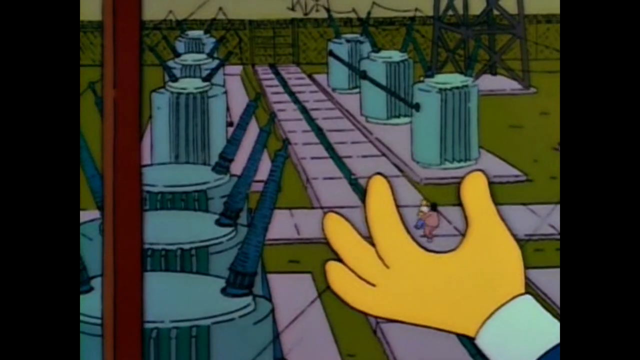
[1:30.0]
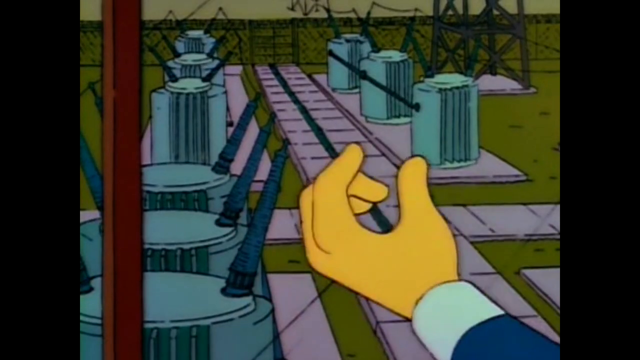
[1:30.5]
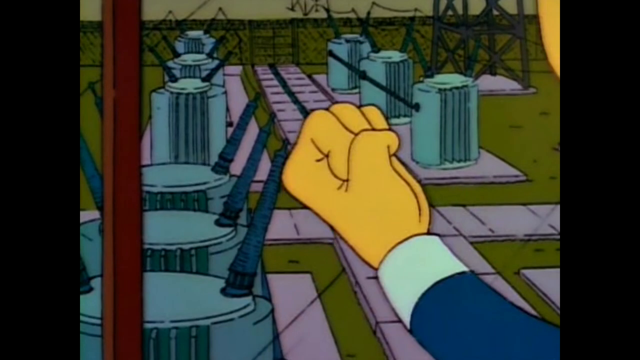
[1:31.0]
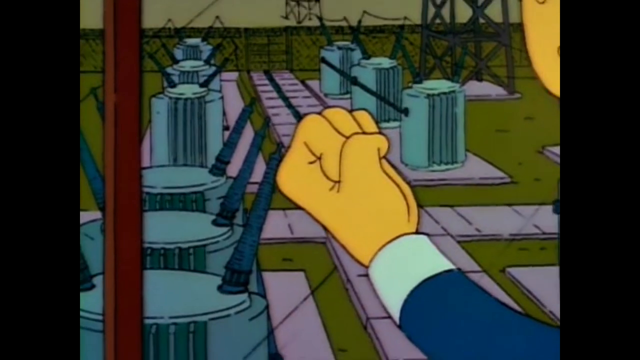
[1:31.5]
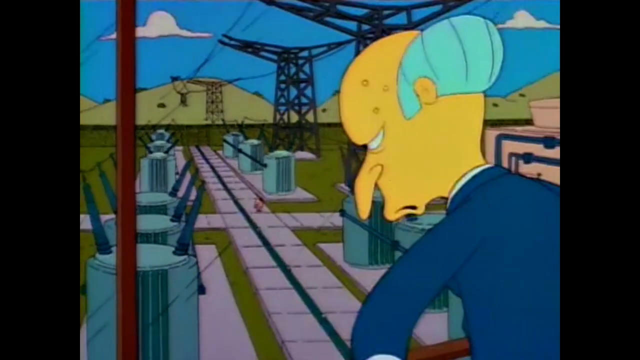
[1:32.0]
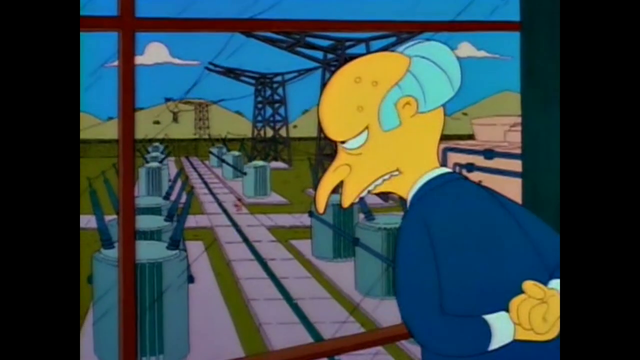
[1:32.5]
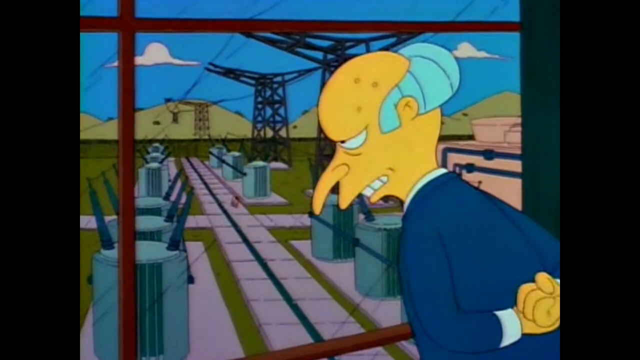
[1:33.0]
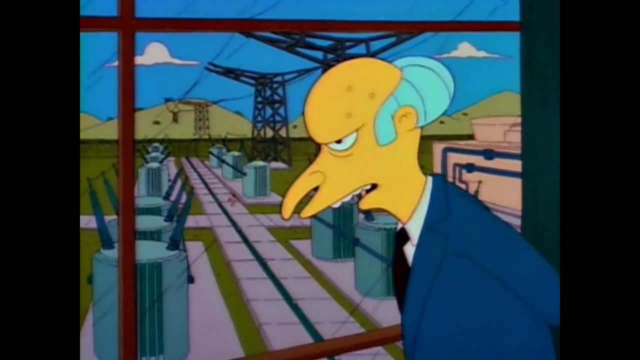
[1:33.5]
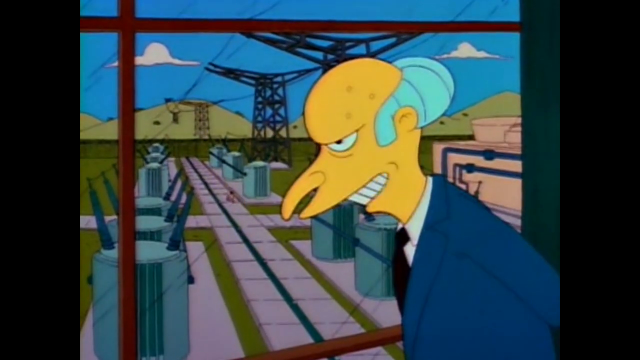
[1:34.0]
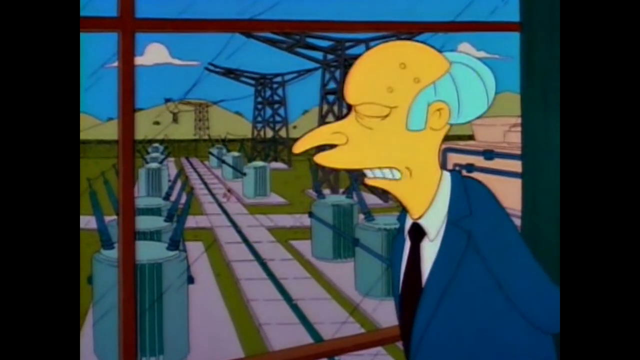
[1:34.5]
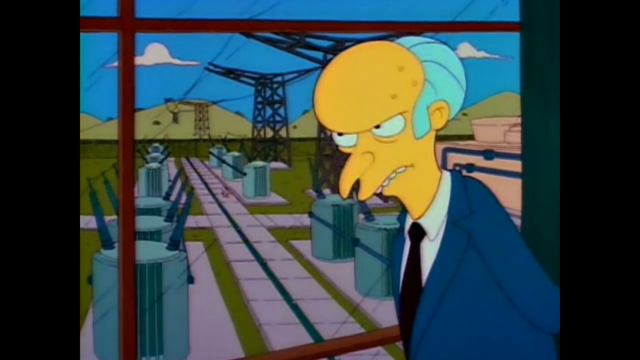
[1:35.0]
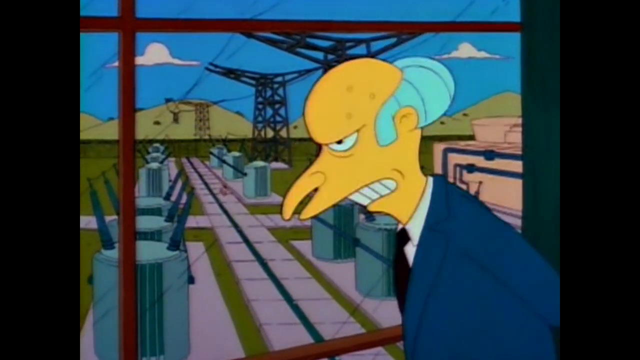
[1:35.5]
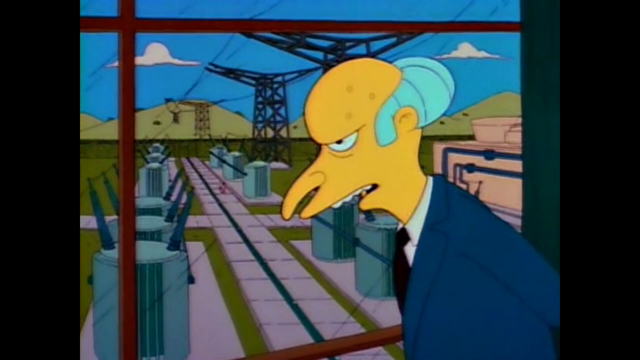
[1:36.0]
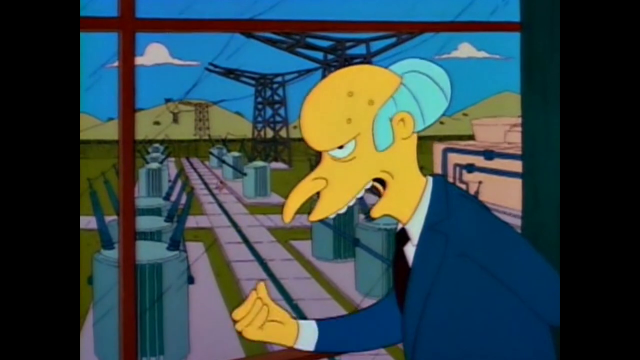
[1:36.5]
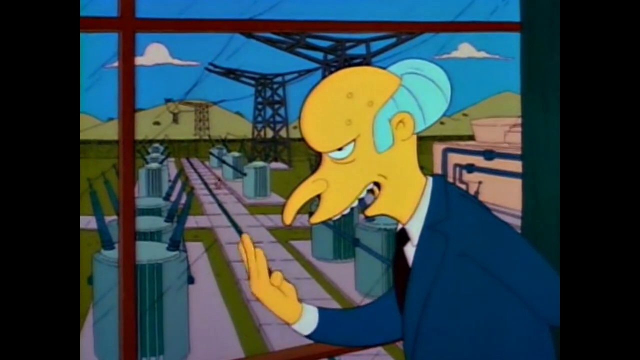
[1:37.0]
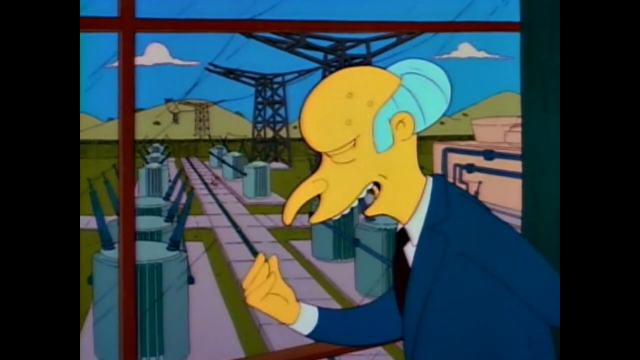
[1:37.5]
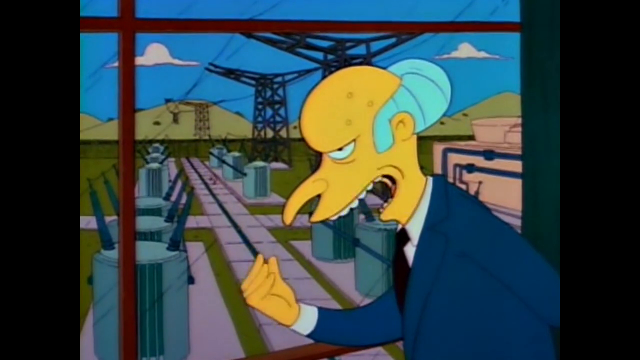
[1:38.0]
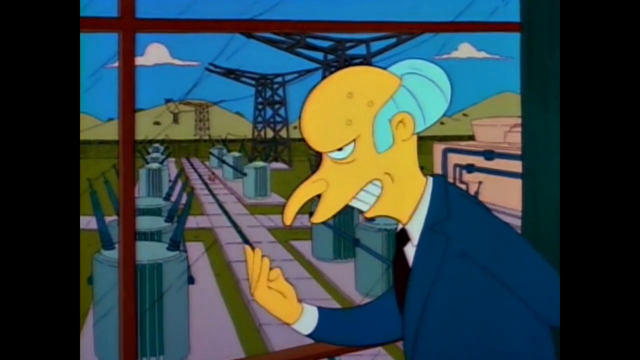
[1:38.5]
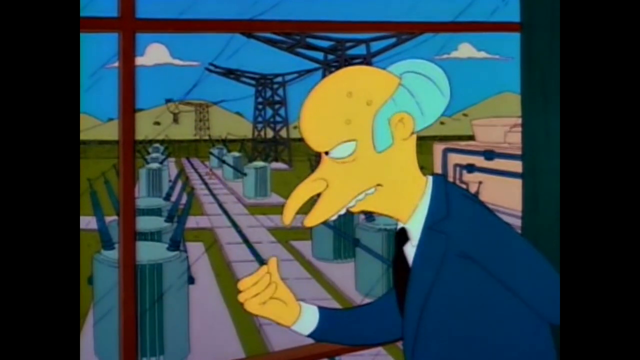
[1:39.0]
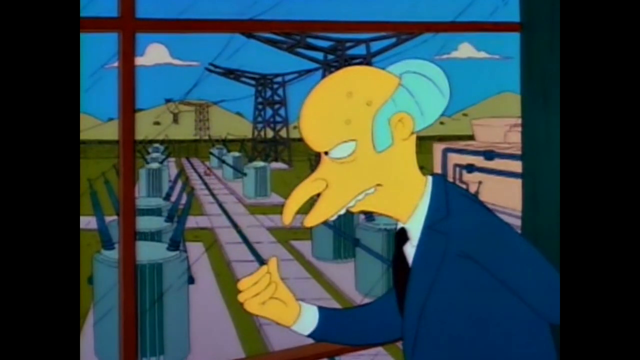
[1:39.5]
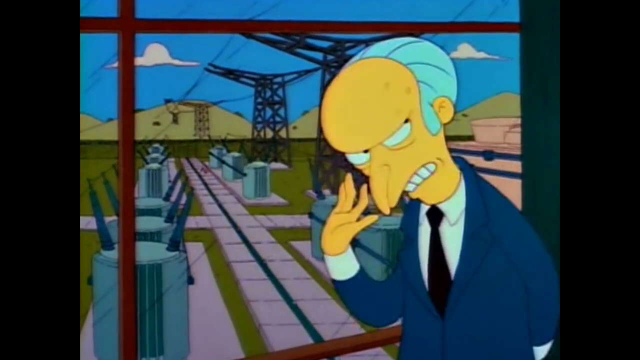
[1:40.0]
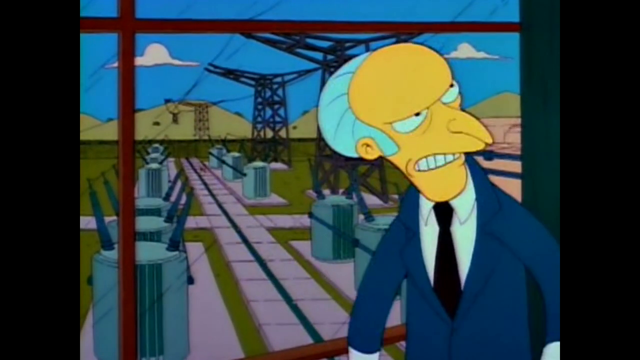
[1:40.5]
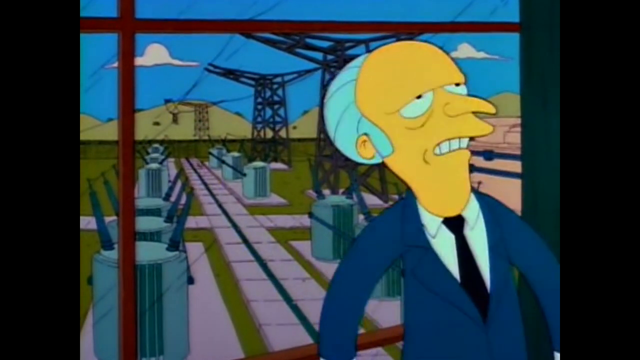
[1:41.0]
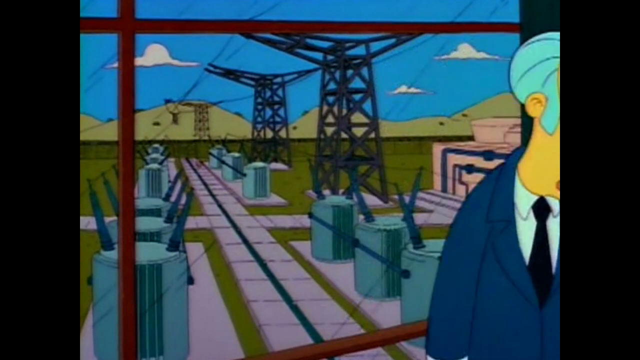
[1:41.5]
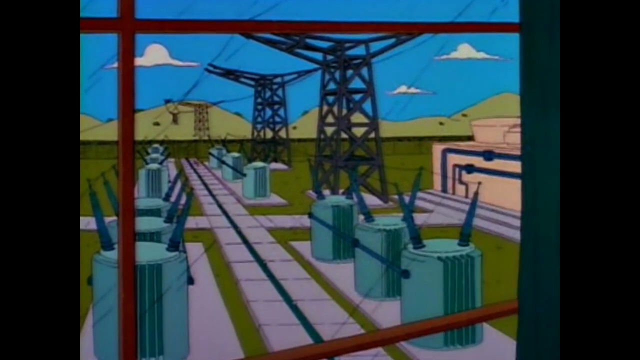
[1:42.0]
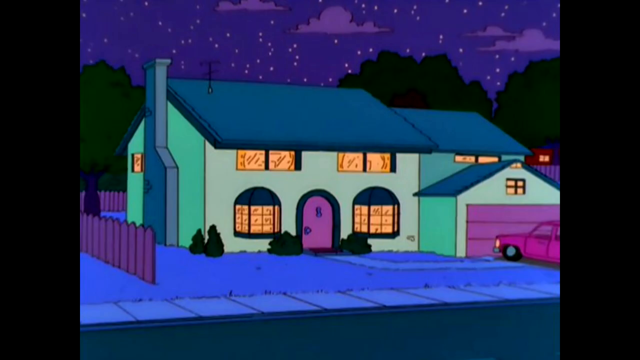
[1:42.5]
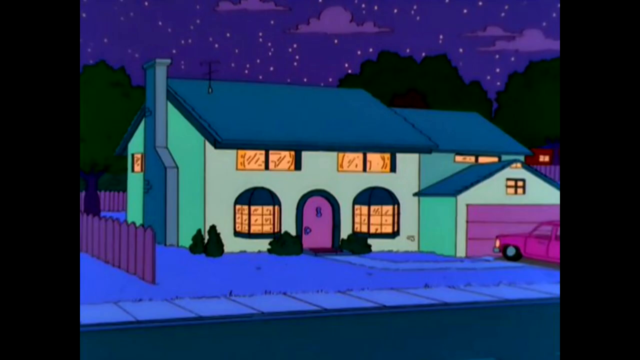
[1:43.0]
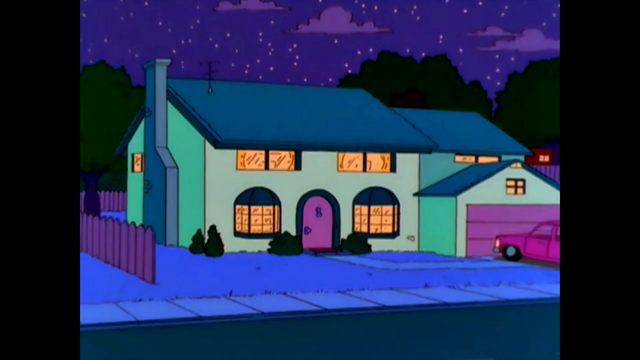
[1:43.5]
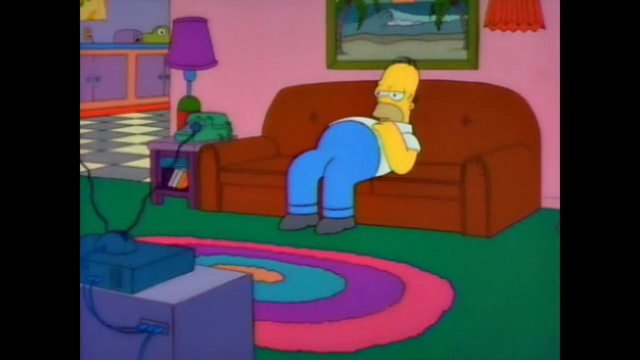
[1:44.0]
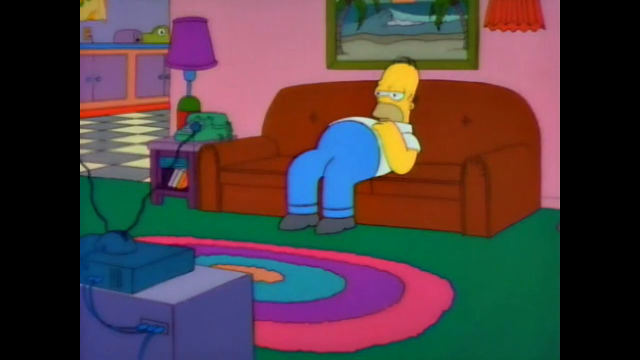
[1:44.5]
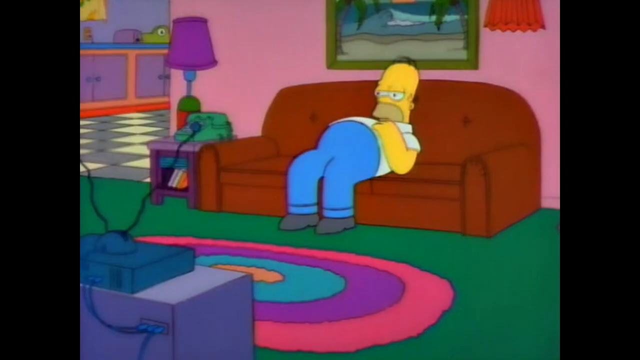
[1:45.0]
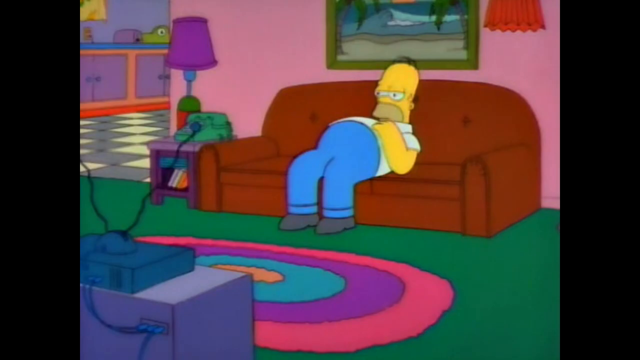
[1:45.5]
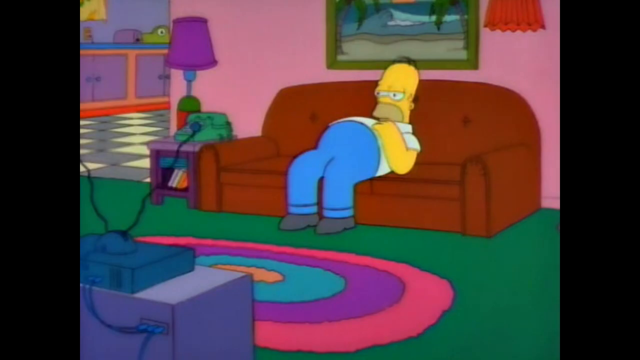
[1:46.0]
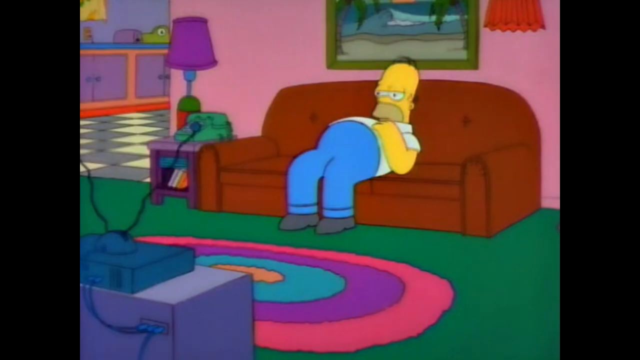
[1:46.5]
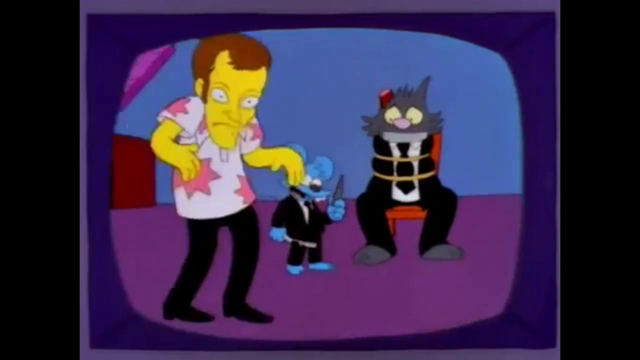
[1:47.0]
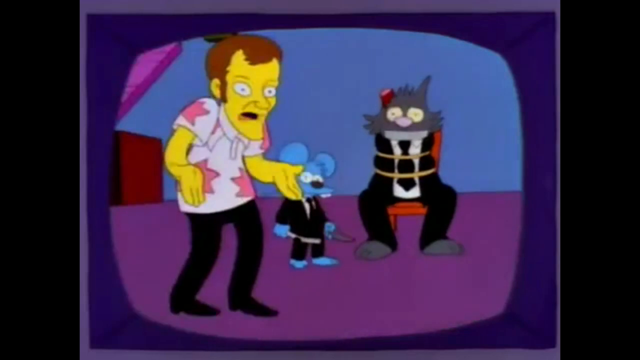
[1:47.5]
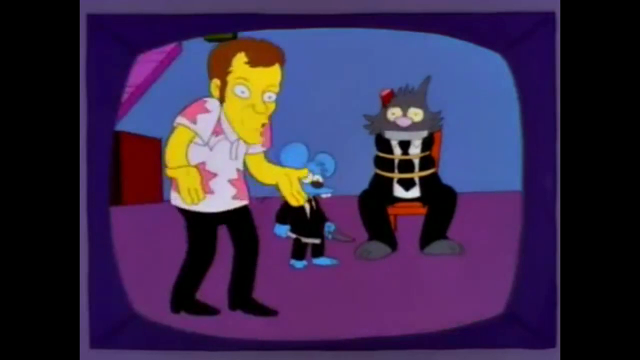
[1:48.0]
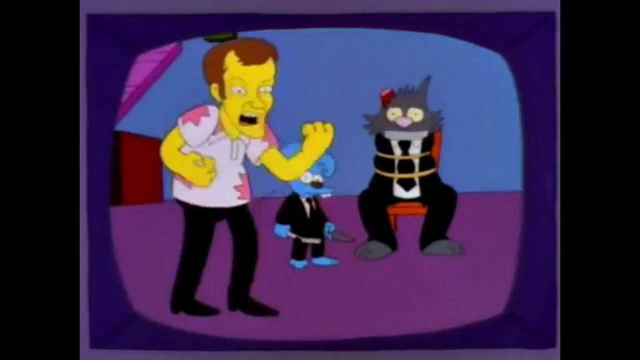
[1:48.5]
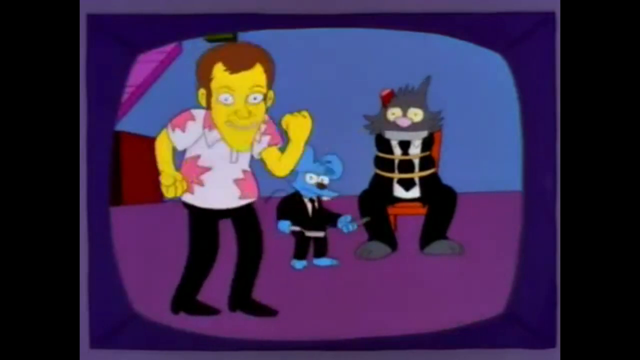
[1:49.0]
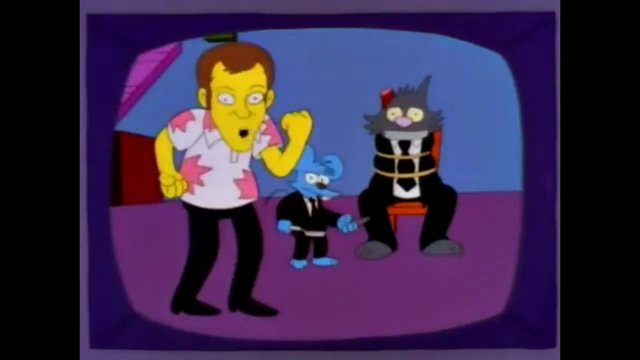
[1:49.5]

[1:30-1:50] Mr. Burns squeezes his hand, so from this distance it kind of looks like he is crushing Homer. The view cuts back to a wide shot from behind him, looking out his window at Homer walking down the sidewalk with his lawyer. Mr. Burns turns to the left, talking, looking very sinister and menacing, raises his right hand in front of his face and rubs his thumb against his fingers as he talks. He stops, looks up to the right while talking, and walks off the right side of the screen. A wide shot shows the Simpsons' house at night with a car on the right side, a dark blue sky with little dots for lights, and all the lights in the house on. The scene cuts to Homer in the center on the couch, sitting but leaning back so his shoulders are almost parallel with his hips, head resting against the back and feet draped down. There is green carpet with a rug on it, and a multi-colored TV in the bottom left corner, seen from the back, with an antenna on top. A little of the kitchen is visible at the top left. He is watching a cartoon with a man on the left who looks kind of like Quentin Tarantino, a little blue mouse and a gray cat. The mouse and cat are both in black and white suits; the cat is tied up, sitting in a chair, and the mouse has two knives. The man holds his hands out, gesturing as he talks, then makes a fist and shakes it.